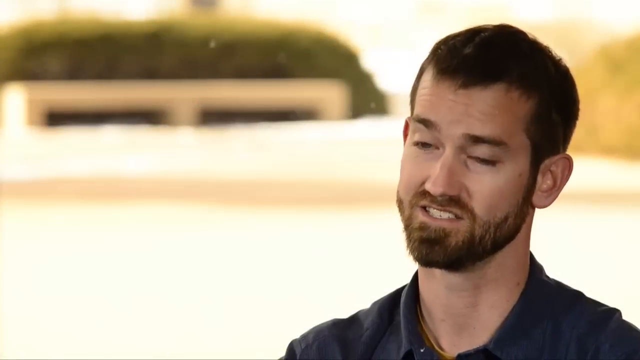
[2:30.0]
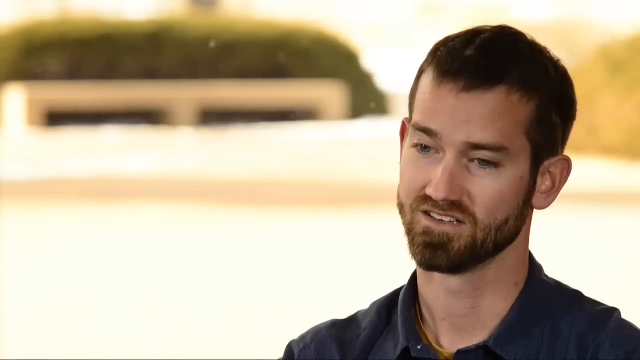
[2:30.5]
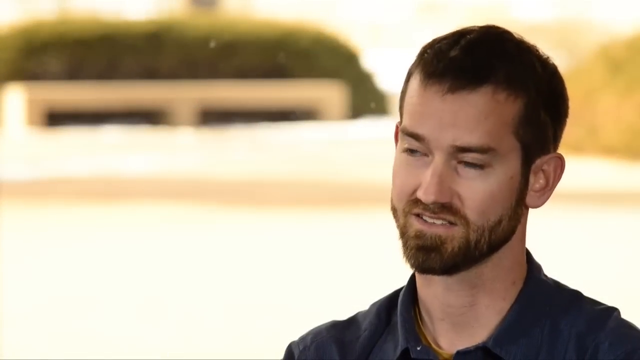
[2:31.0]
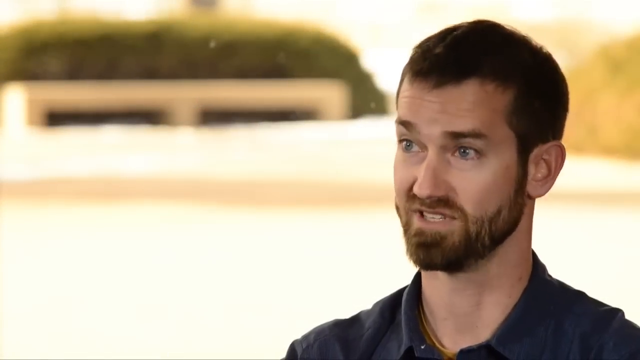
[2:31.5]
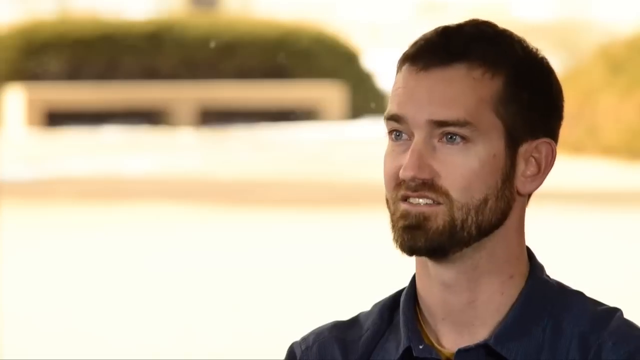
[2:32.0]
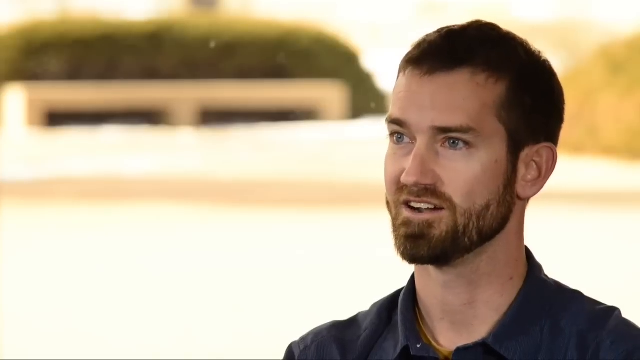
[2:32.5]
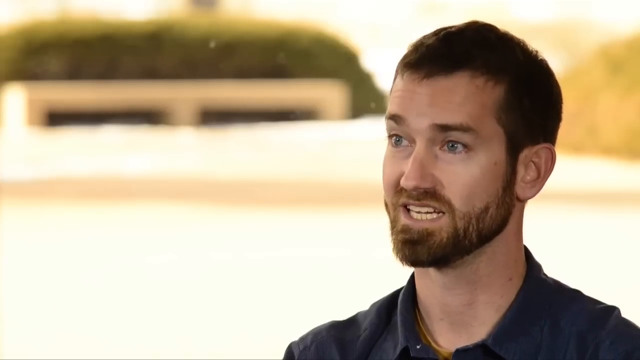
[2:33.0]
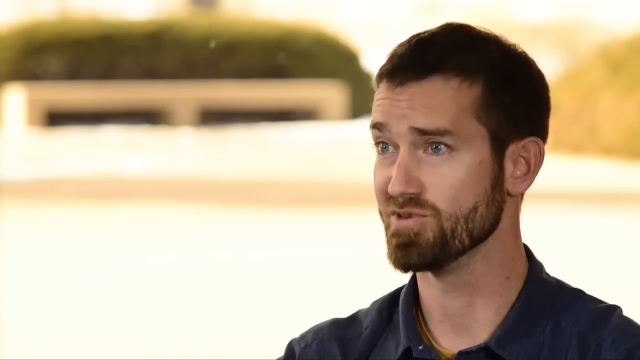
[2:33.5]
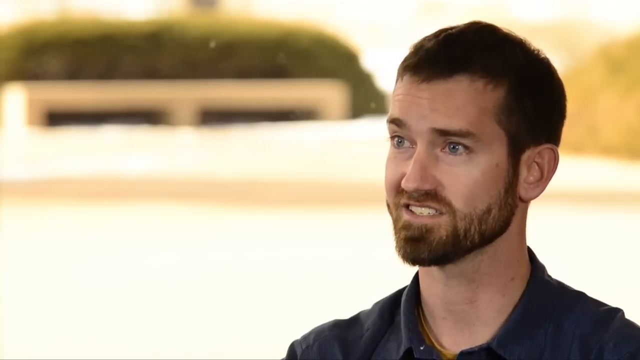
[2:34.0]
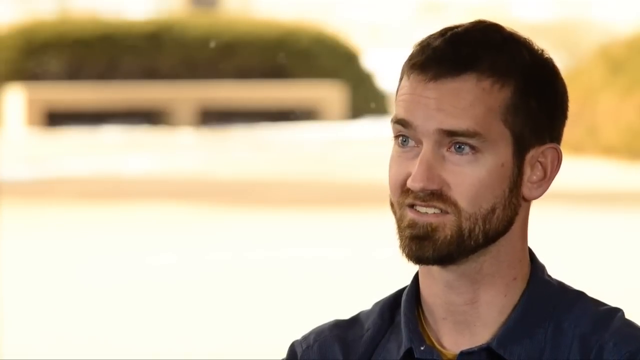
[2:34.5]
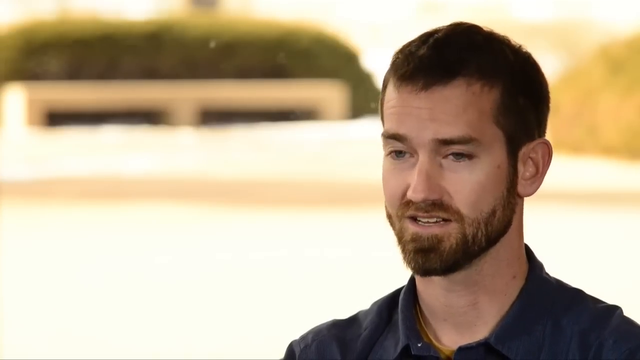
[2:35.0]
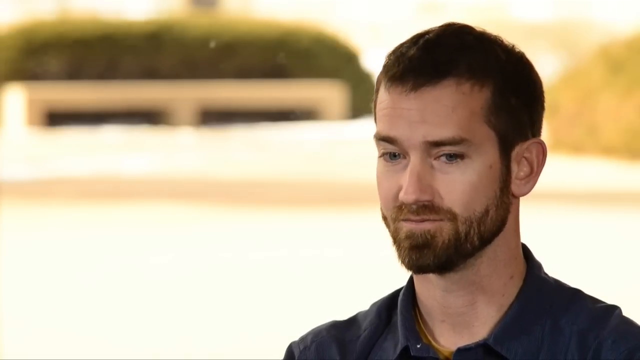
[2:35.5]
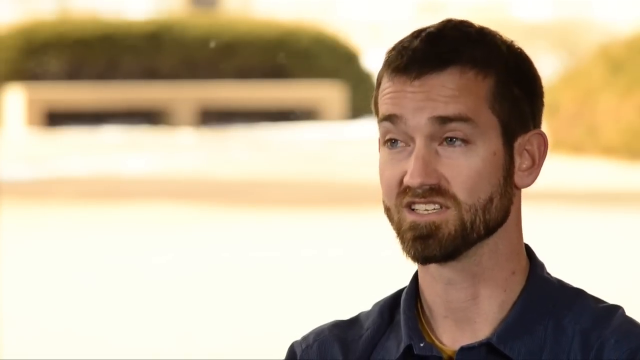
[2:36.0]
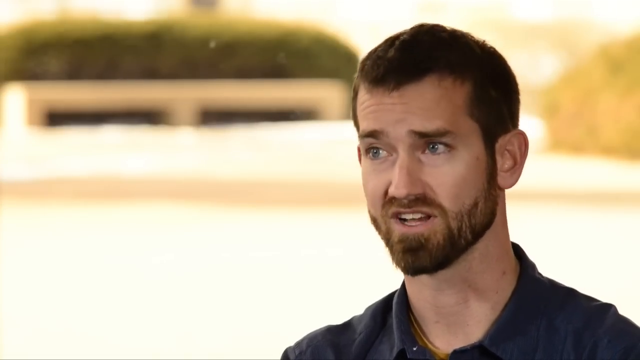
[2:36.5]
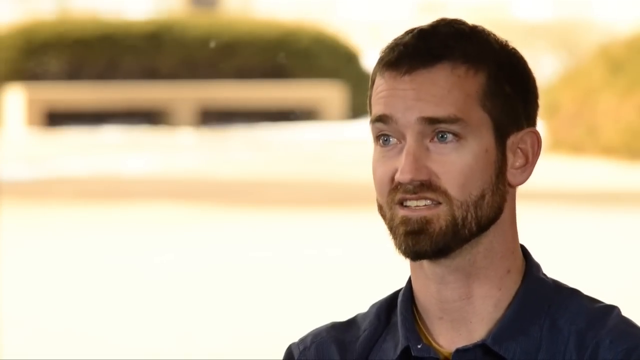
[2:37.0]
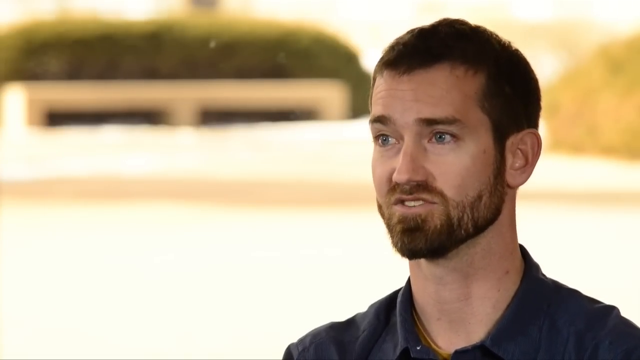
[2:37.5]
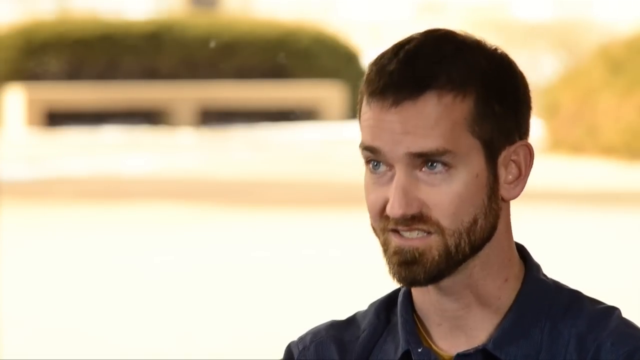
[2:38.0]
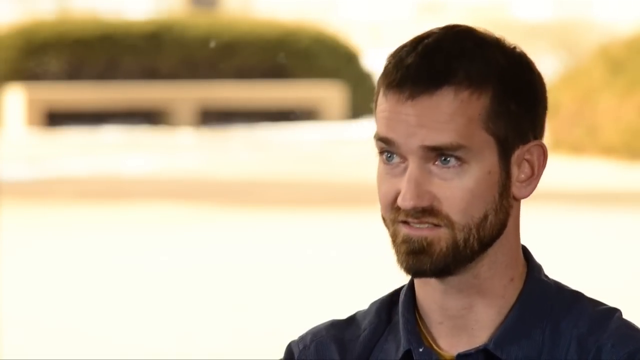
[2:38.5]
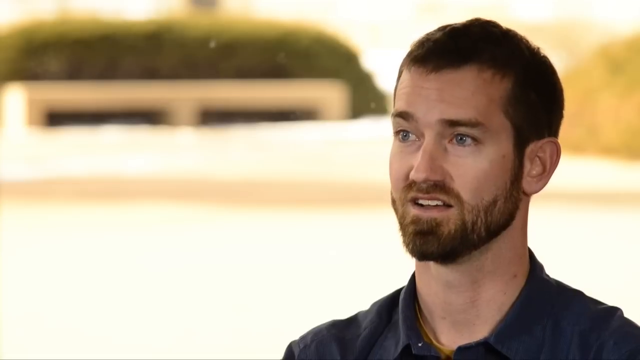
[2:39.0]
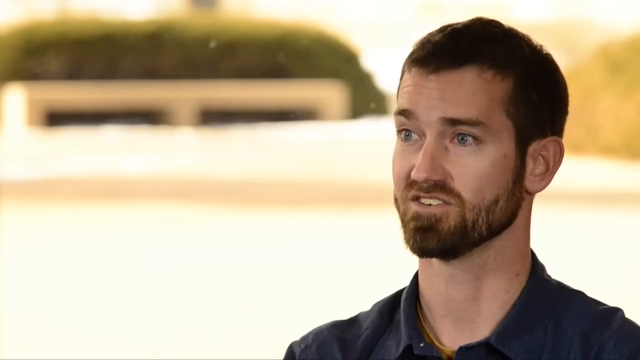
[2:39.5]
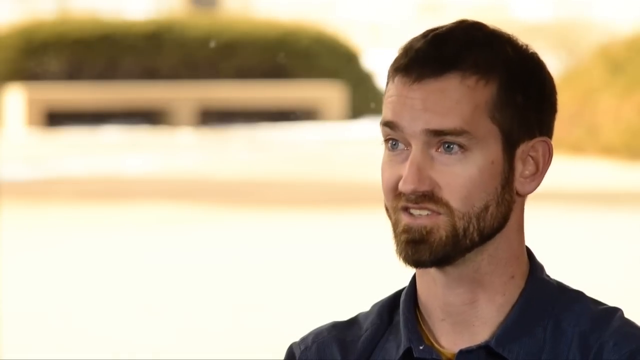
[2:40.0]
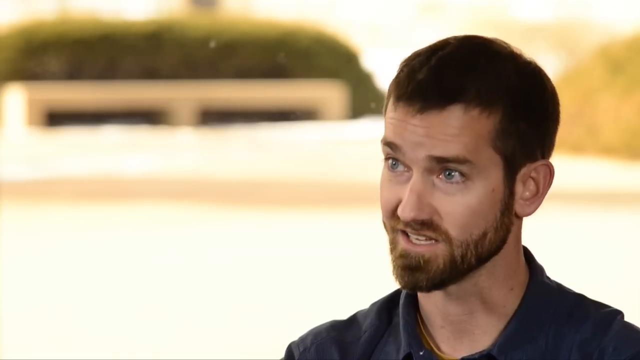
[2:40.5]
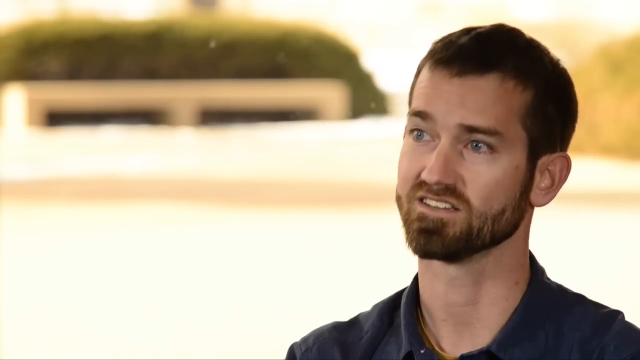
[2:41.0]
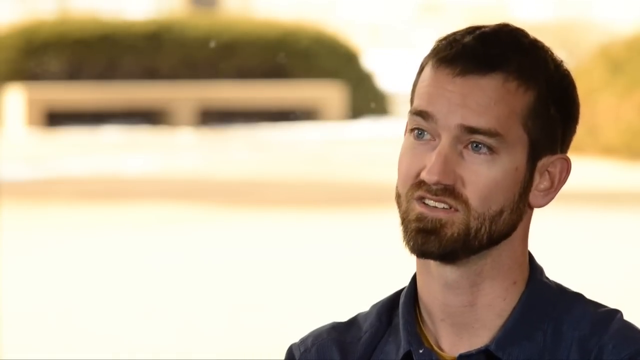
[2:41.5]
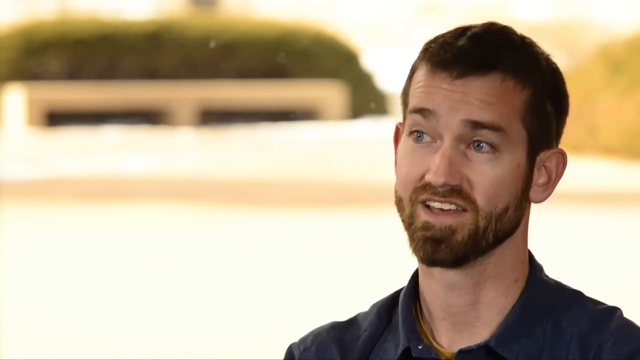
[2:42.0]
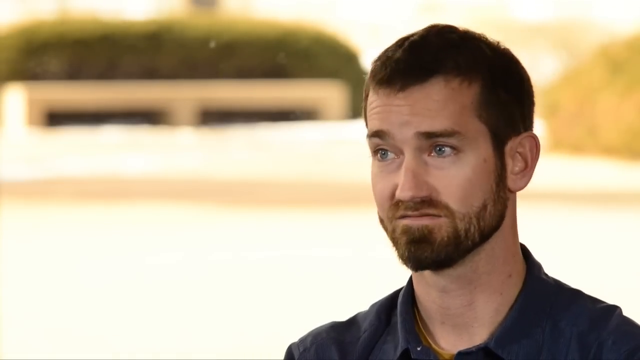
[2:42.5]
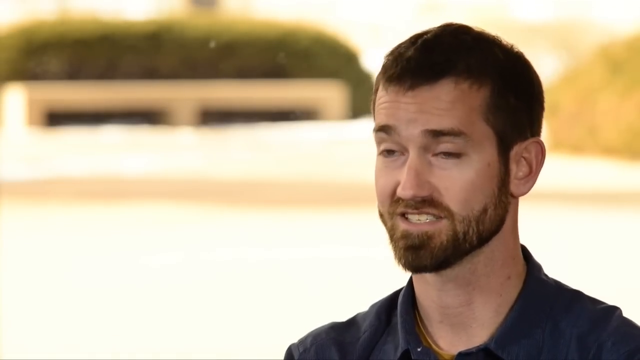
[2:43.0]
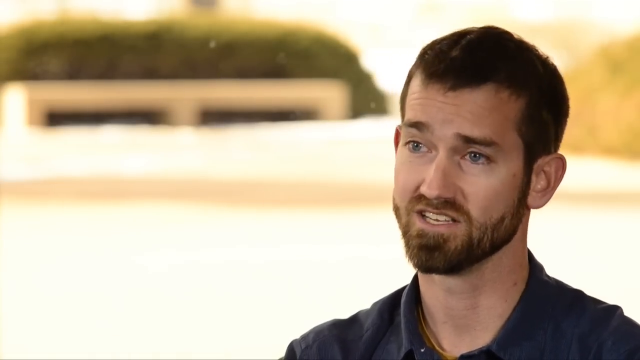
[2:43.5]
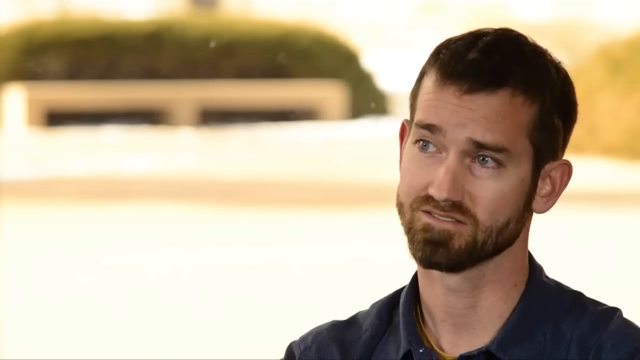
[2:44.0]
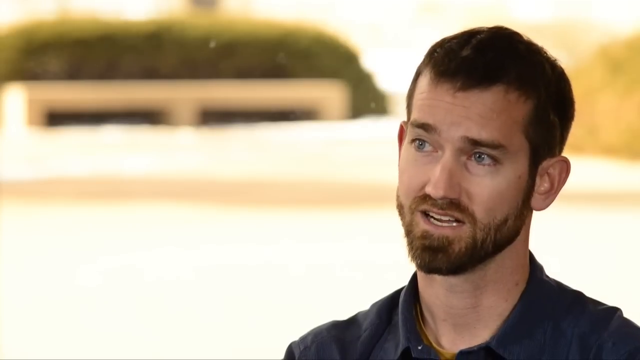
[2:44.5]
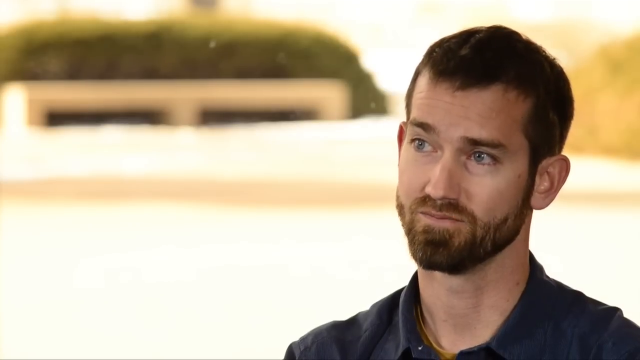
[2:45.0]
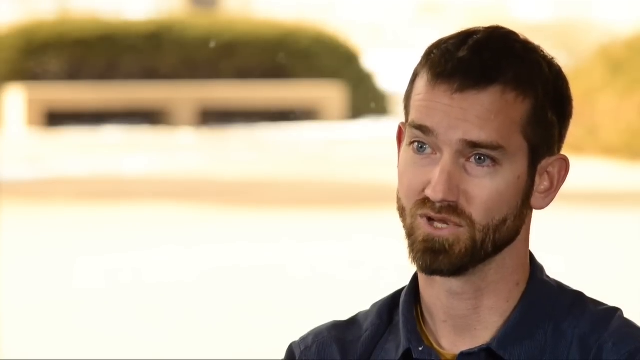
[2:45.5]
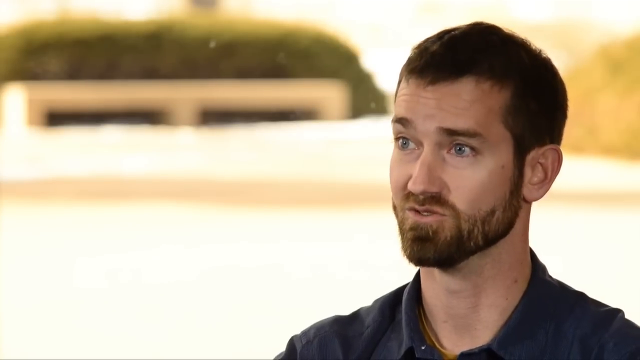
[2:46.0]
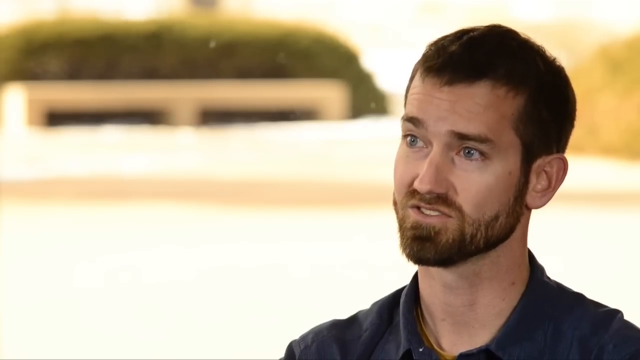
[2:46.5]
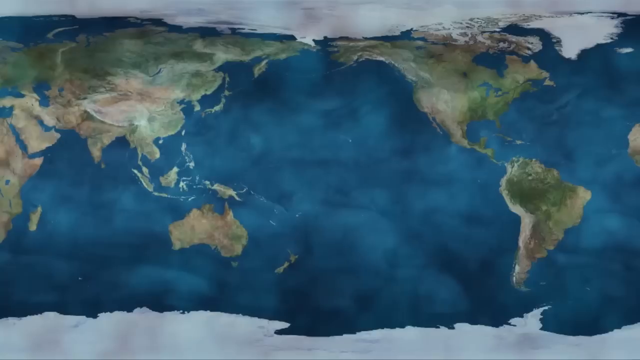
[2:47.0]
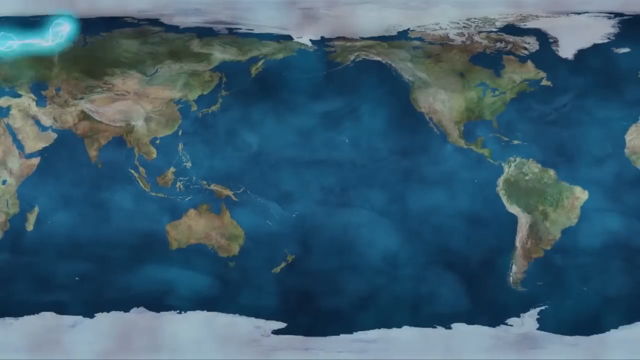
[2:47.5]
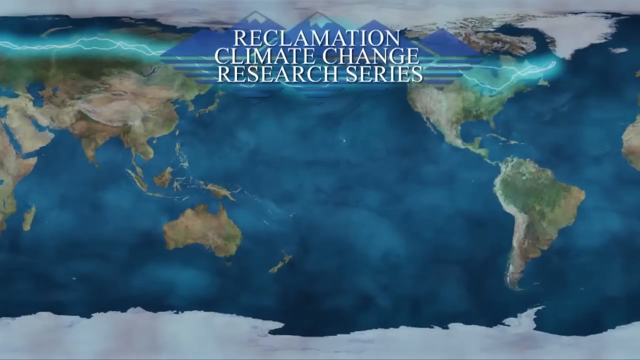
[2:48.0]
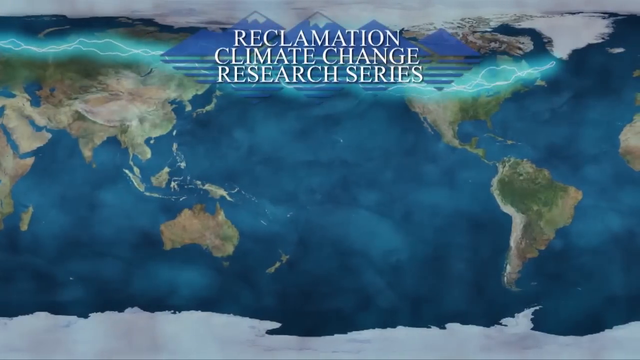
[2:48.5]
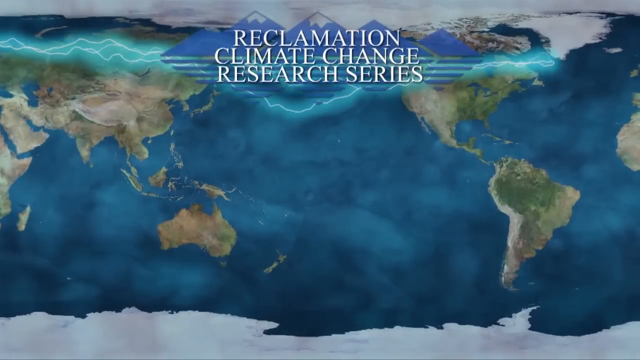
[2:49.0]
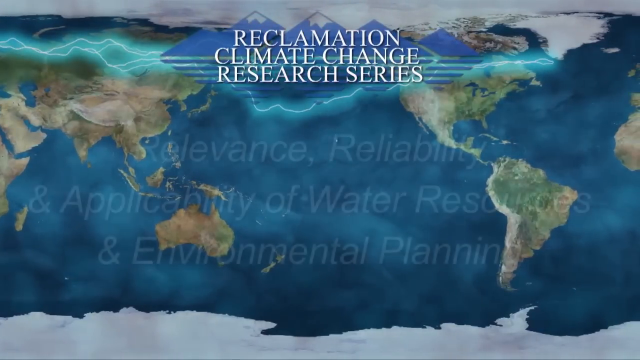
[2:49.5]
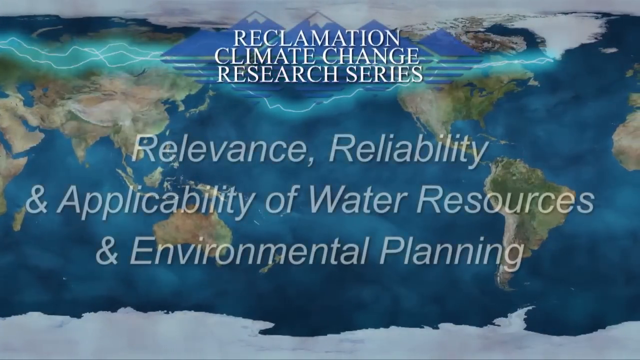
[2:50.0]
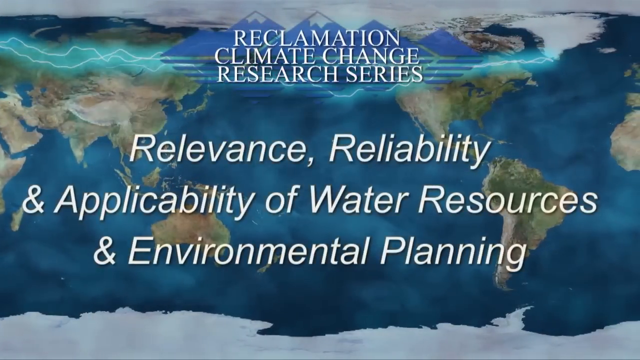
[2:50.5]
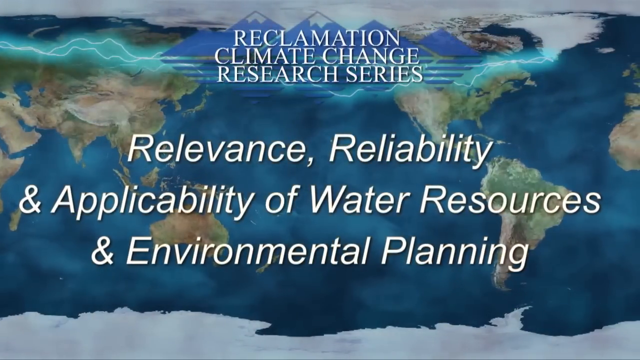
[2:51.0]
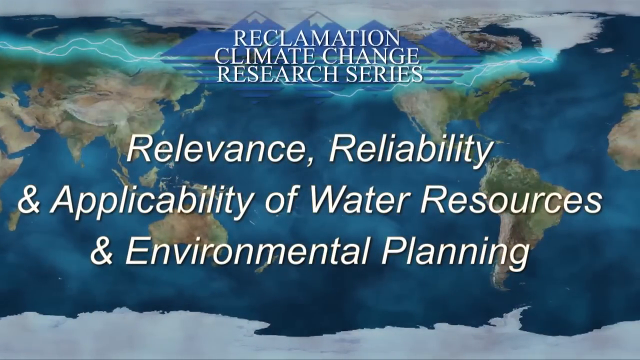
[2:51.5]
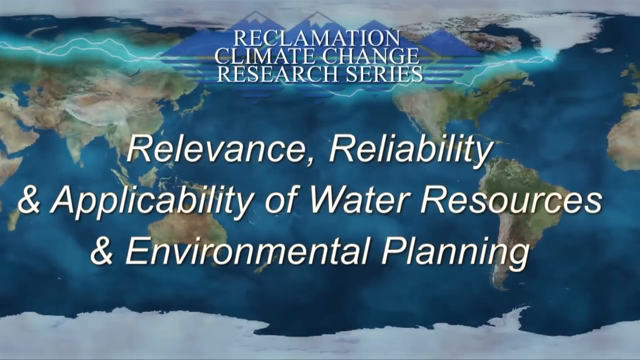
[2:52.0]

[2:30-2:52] A man with short black hair, a dark moustache and a beard, wearing a dark blue shirt, talks to somebody off camera who cannot be seen. He has a slightly concerned look on his face as he nods his head and slightly raises his eyebrows while he speaks; he seems to be being interviewed. Green trees are visible in the background. The video switches to a graphic of a map of the world with green continents and landmasses and blue oceans. White words on the screen read "Reclamation Climate Change Research Series, relevance, reliability and applicability of water resources and environmental planning". The man nods his head in agreement with the interviewer and shakes his head at other times.